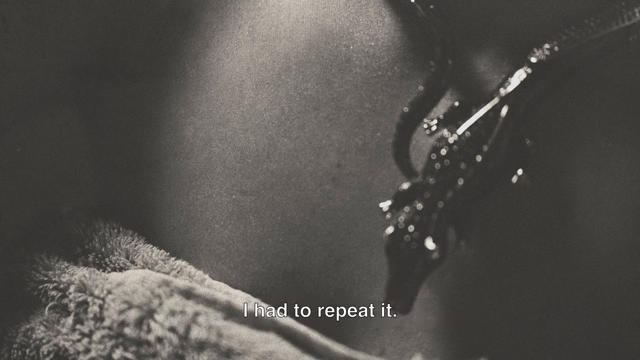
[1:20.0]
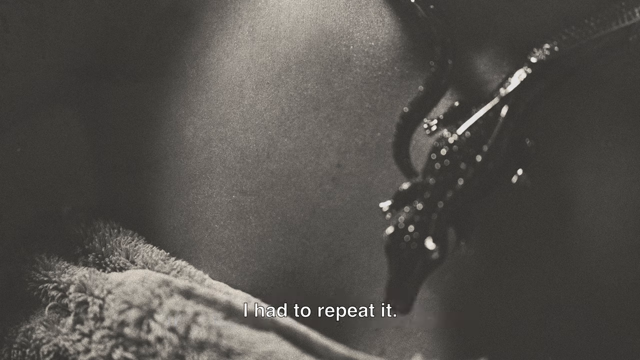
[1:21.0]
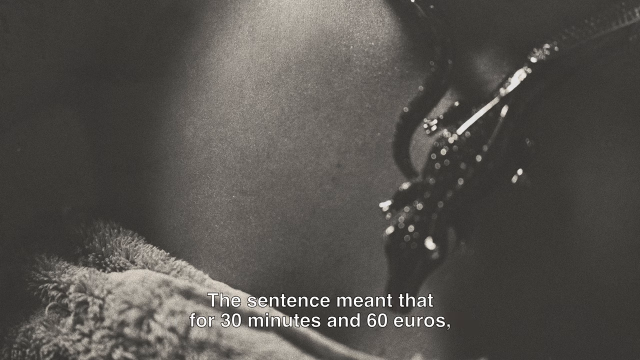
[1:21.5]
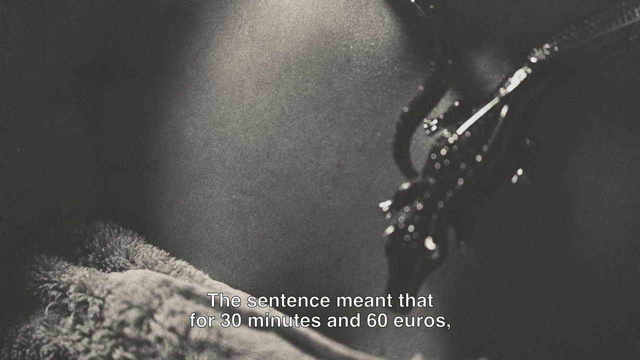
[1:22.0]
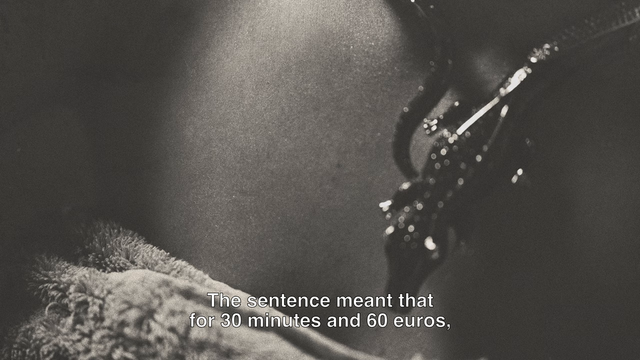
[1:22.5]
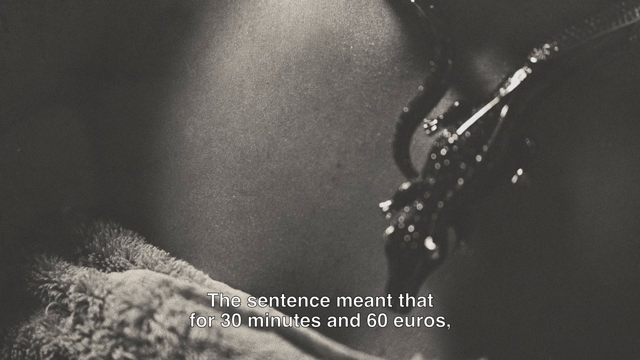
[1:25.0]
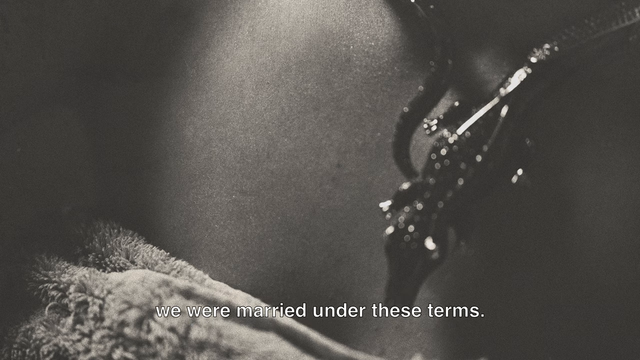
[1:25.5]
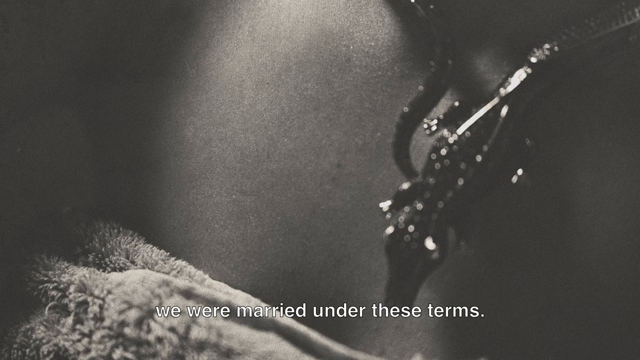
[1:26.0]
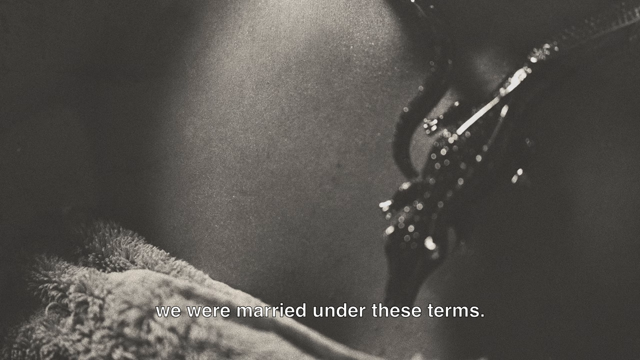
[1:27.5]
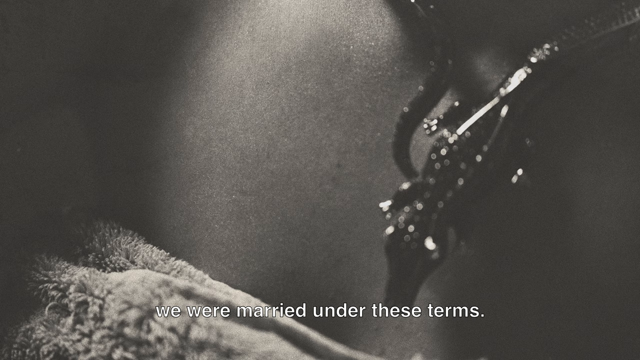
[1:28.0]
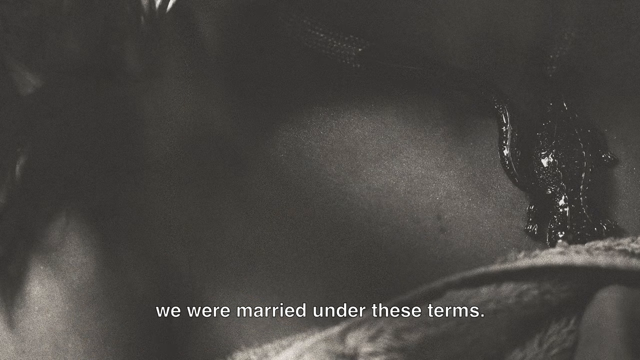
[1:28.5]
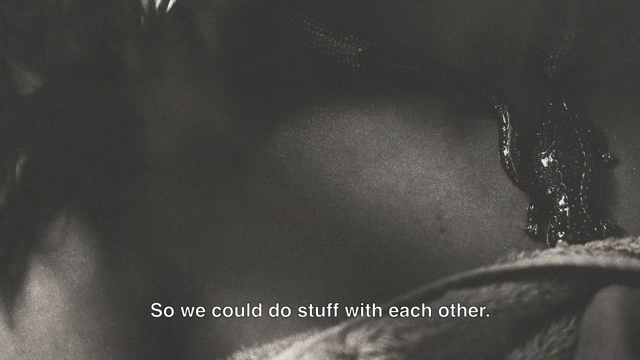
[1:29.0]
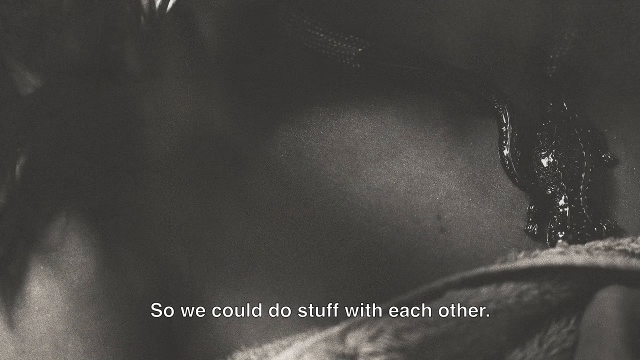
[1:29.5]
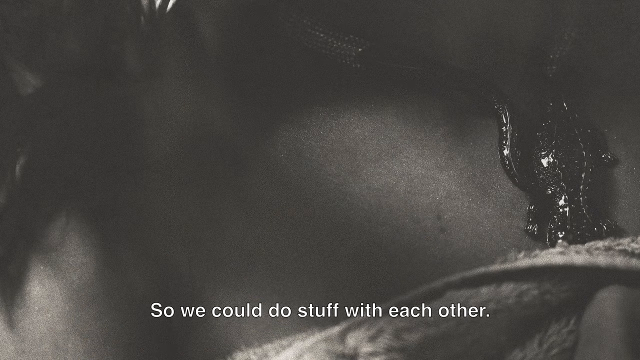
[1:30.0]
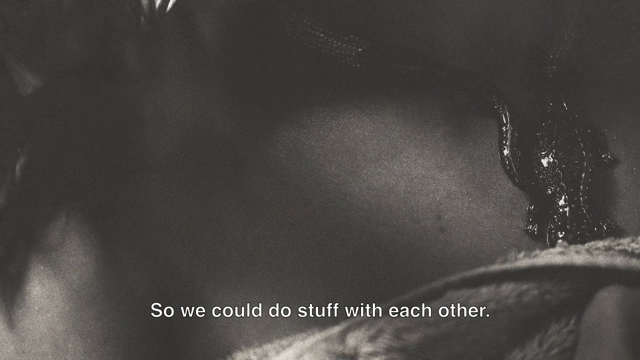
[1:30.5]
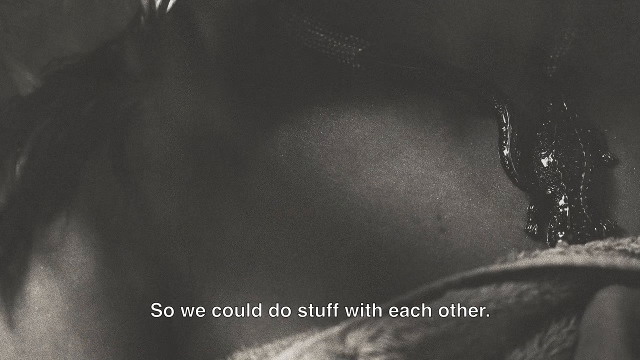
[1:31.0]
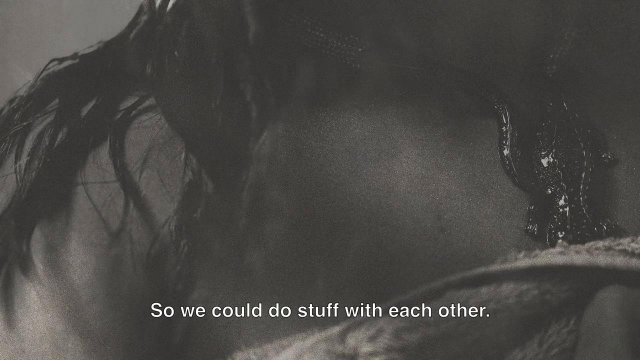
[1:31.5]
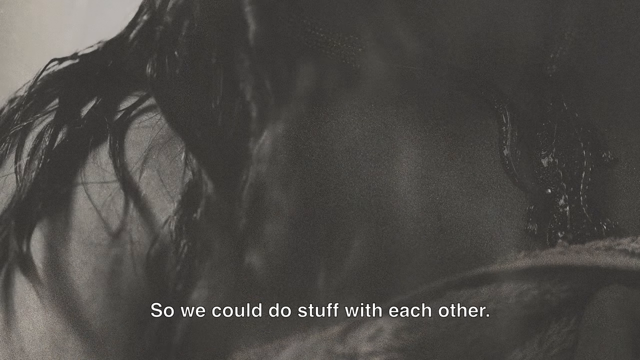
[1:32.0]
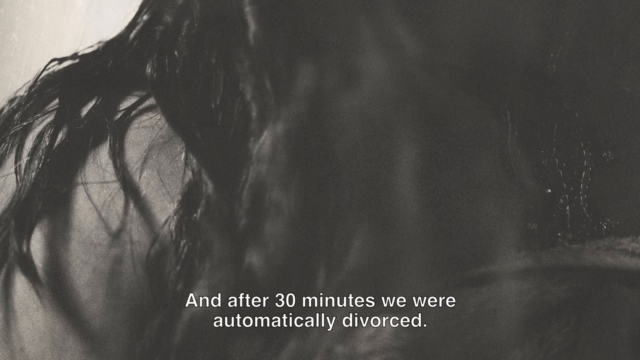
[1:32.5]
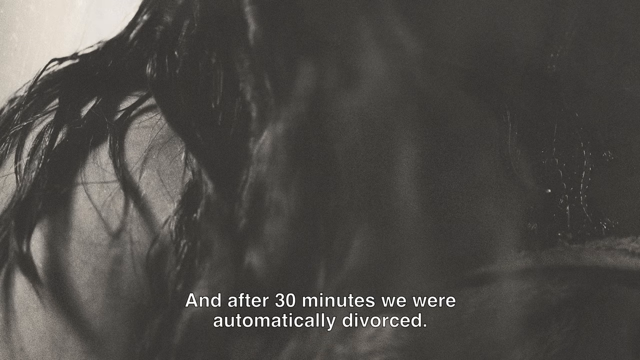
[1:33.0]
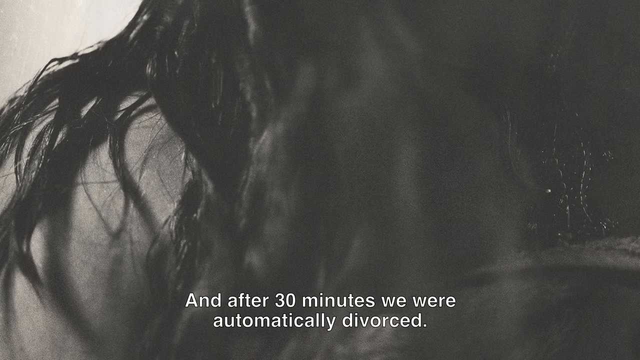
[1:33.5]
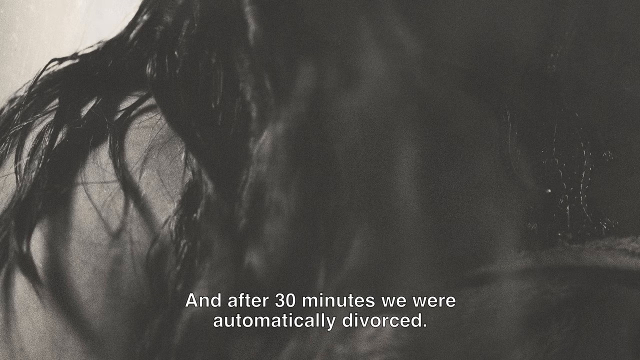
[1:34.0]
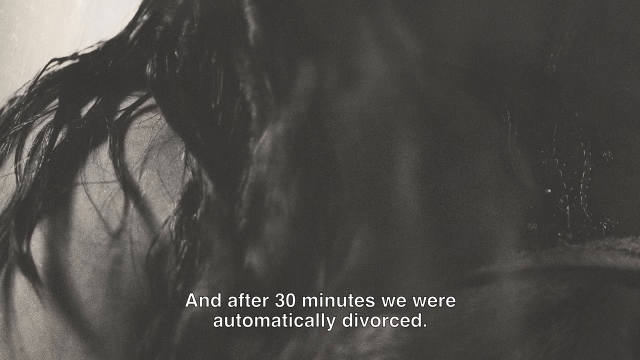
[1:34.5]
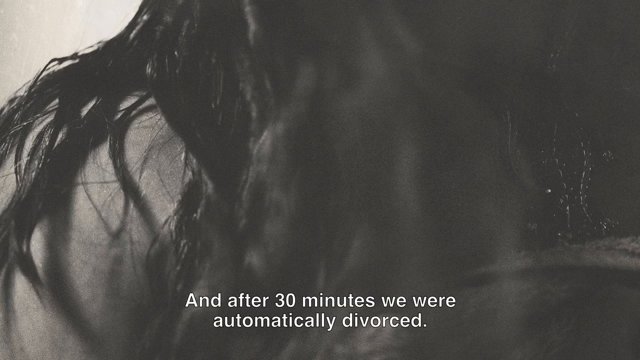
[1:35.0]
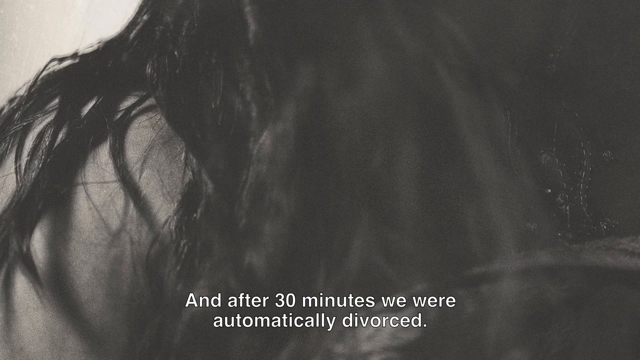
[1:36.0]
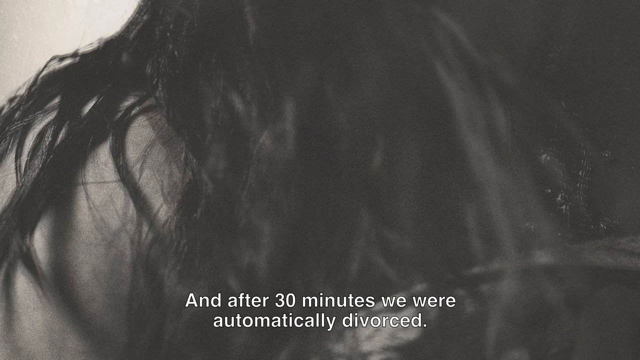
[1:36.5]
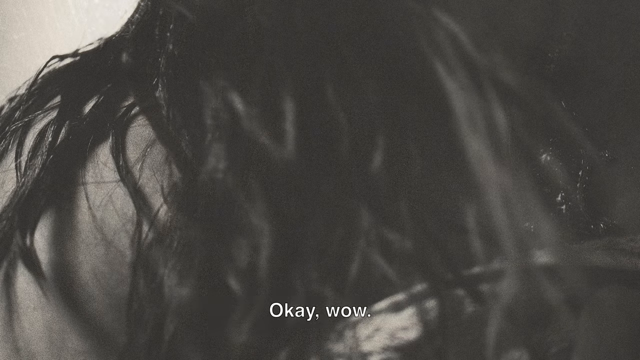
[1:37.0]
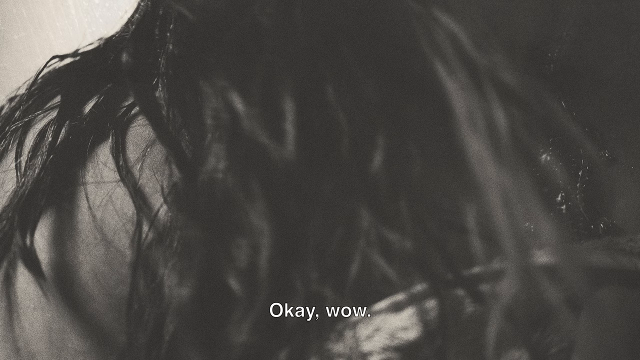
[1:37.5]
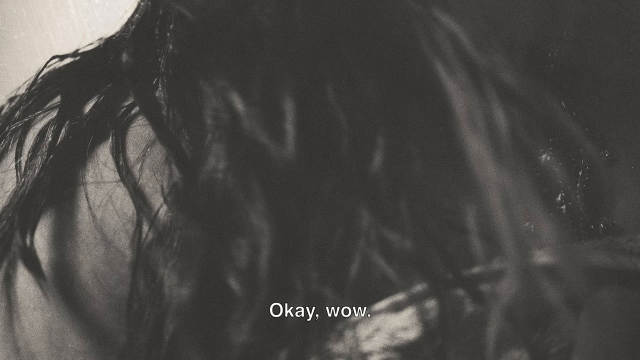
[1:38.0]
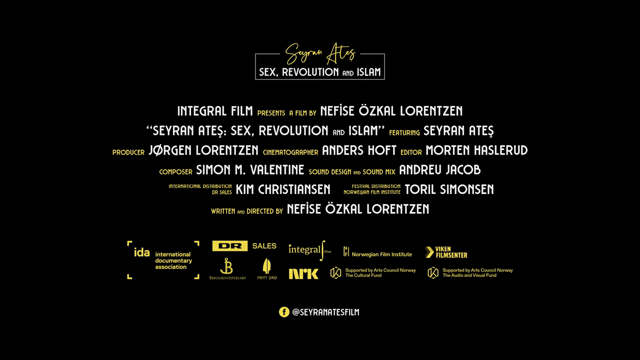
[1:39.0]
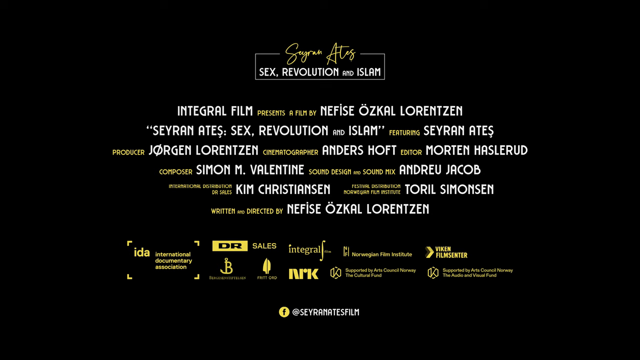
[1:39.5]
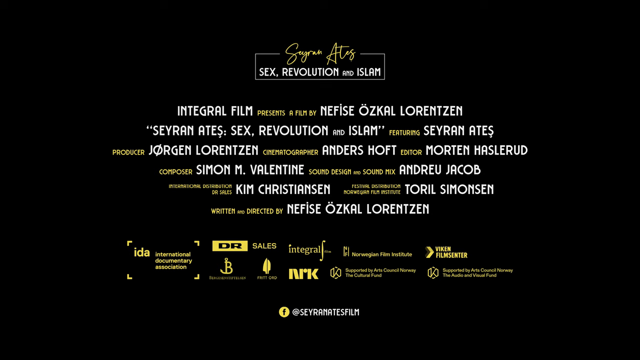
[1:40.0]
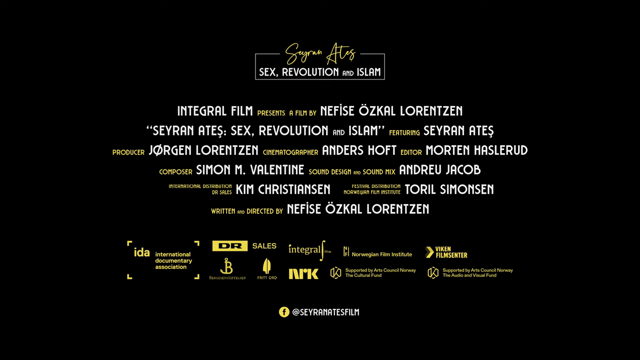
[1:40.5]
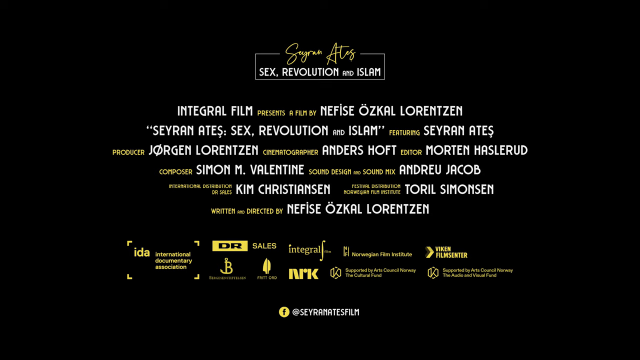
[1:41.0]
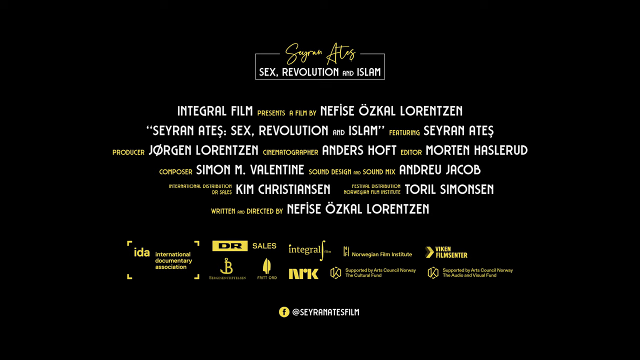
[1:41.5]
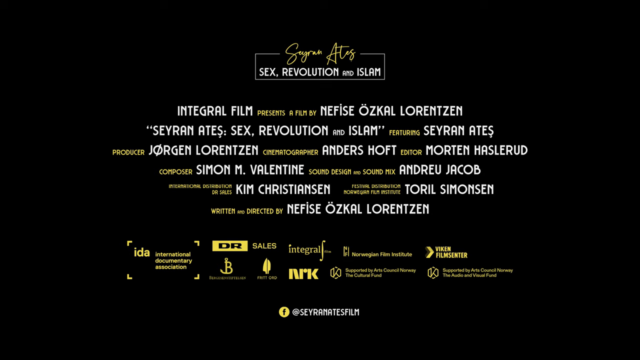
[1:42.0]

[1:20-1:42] The silhouette of Gertrude is shown; only maybe a shoulder and the piece she has around her neck are visible. She appears to have long, maybe brunette hair. At the beginning the caption says "I had to repeat it." Words come in at the bottom of the screen: "okay, wow", and "we were married under these terms, so we could do stuff with each other. And after 30 minutes, we were automatically divorced." At the end, an all-black background screen shows names and roles together, like the end credits of a film or perhaps a film trailer, in white and yellow print that cannot be made out.